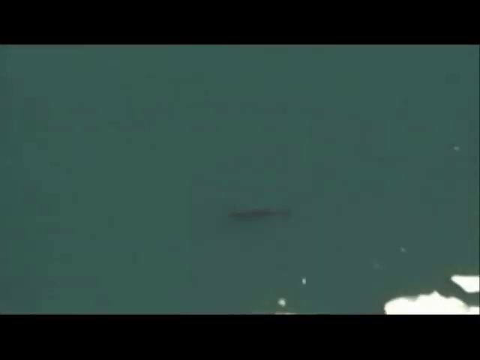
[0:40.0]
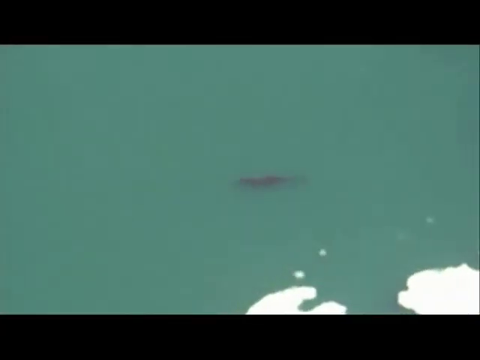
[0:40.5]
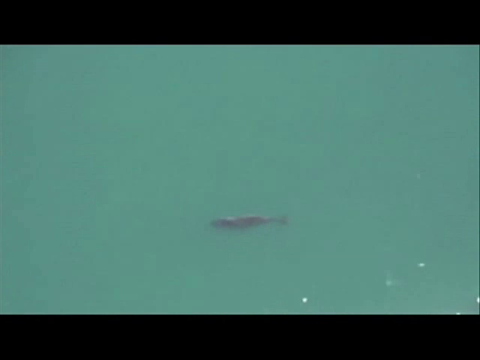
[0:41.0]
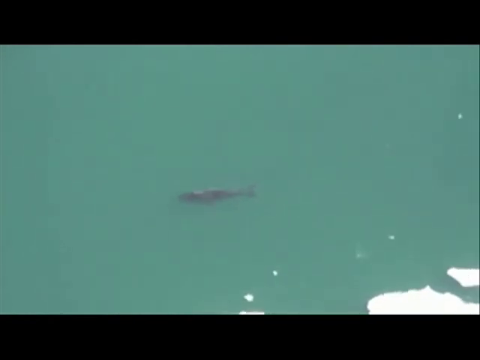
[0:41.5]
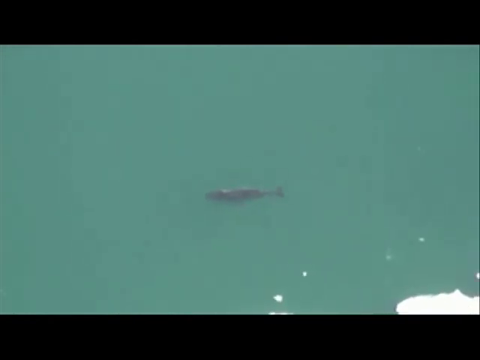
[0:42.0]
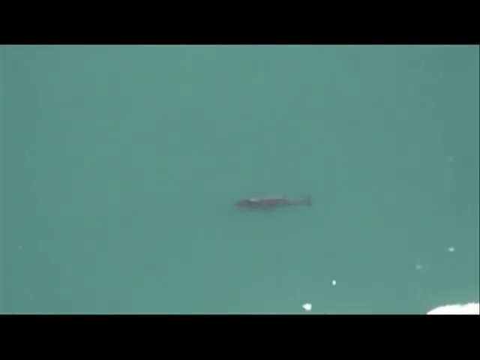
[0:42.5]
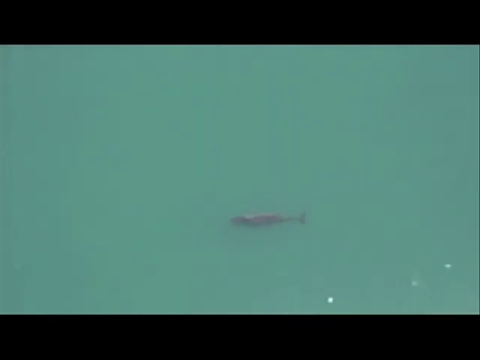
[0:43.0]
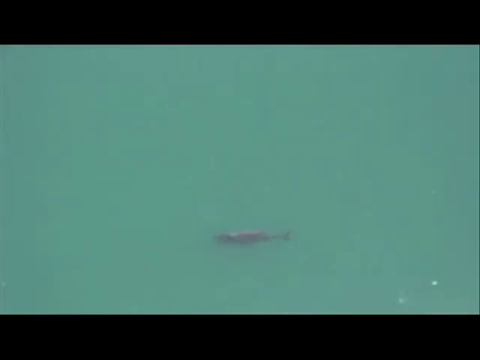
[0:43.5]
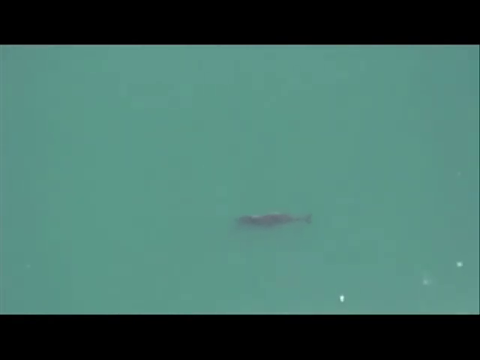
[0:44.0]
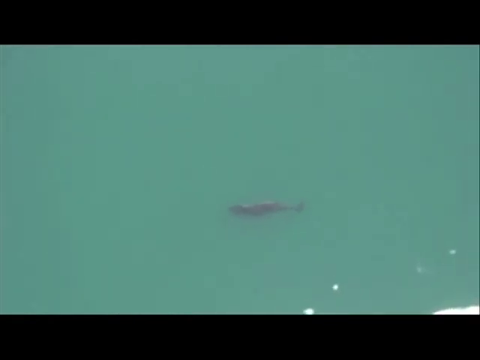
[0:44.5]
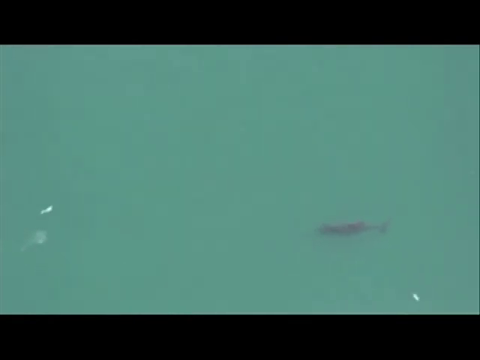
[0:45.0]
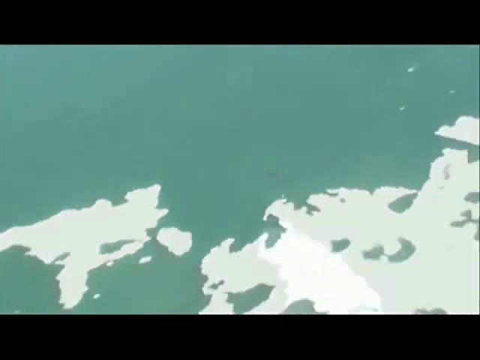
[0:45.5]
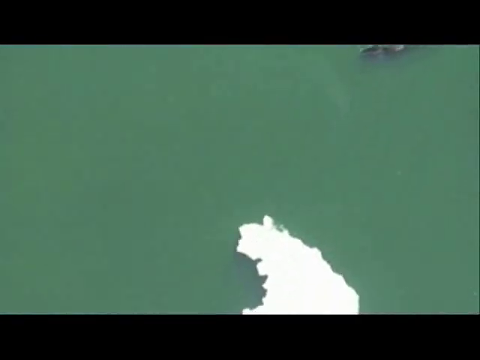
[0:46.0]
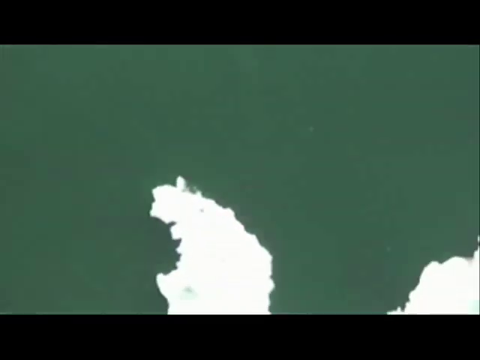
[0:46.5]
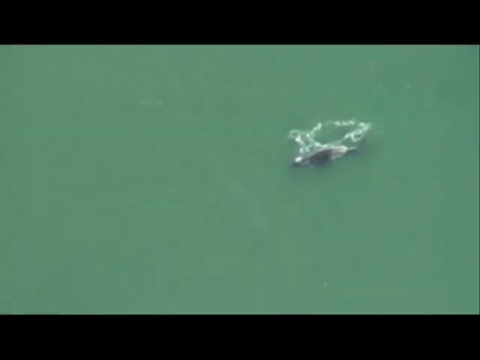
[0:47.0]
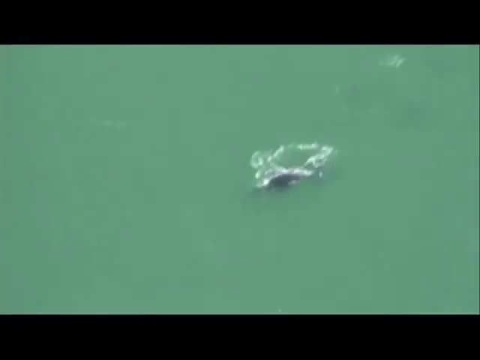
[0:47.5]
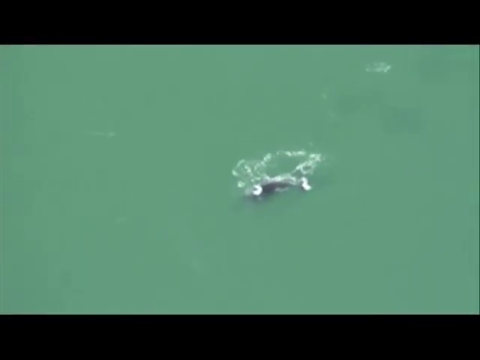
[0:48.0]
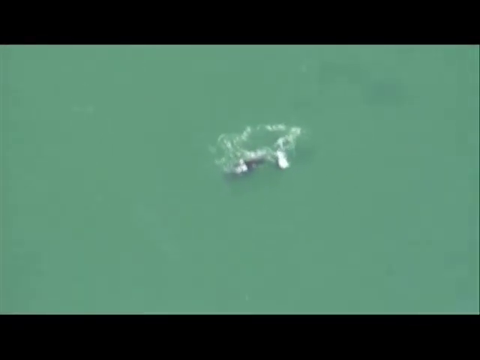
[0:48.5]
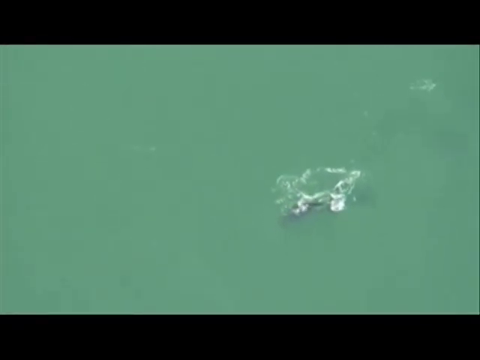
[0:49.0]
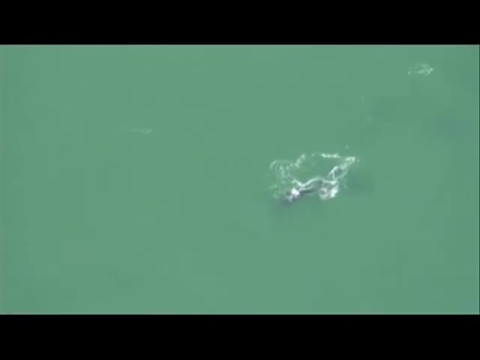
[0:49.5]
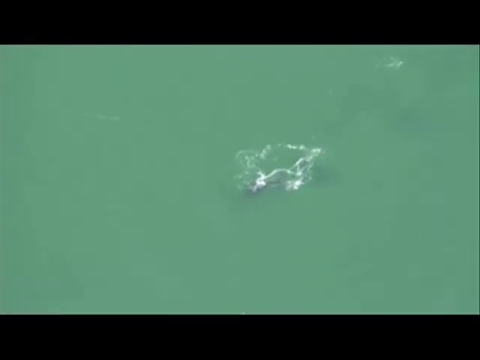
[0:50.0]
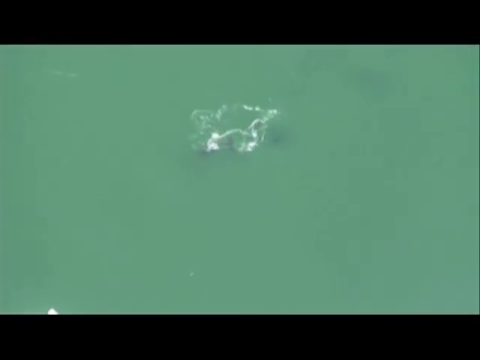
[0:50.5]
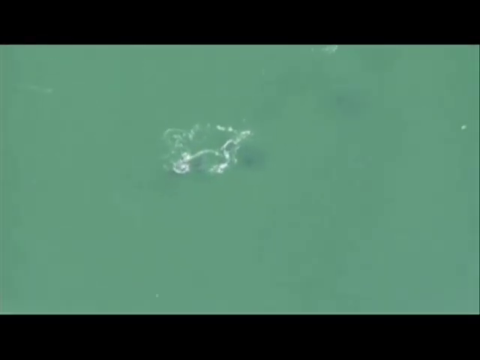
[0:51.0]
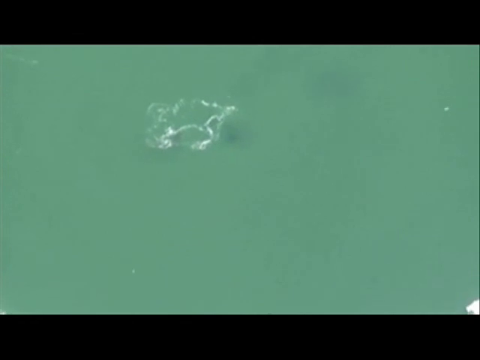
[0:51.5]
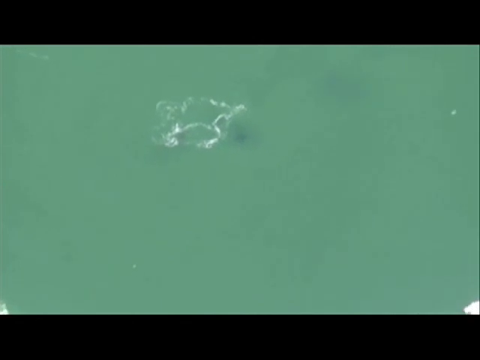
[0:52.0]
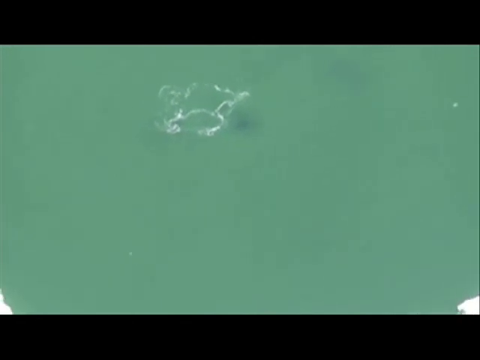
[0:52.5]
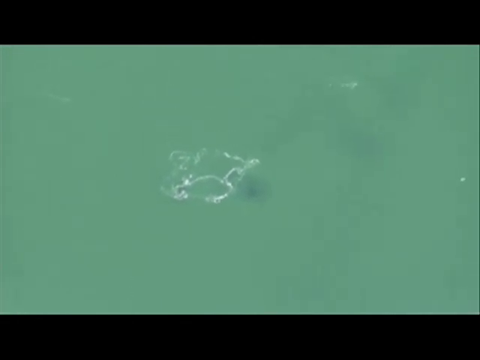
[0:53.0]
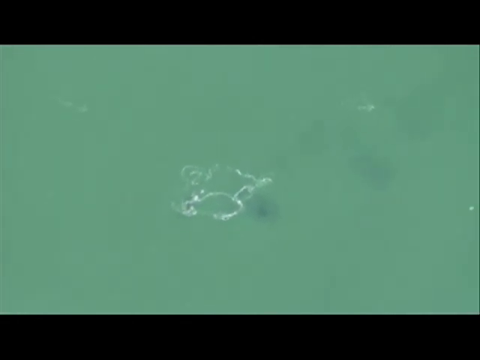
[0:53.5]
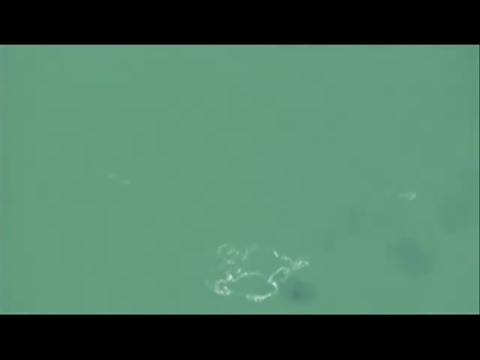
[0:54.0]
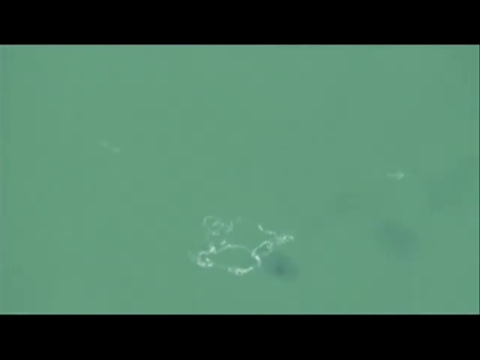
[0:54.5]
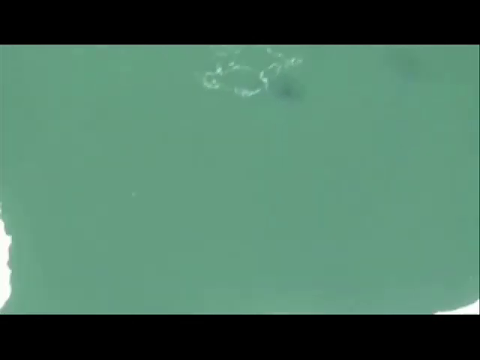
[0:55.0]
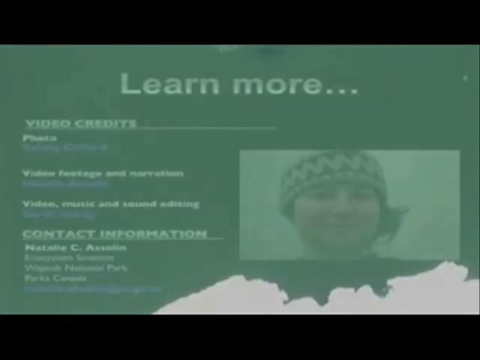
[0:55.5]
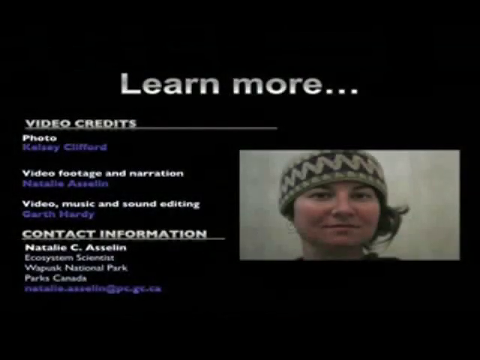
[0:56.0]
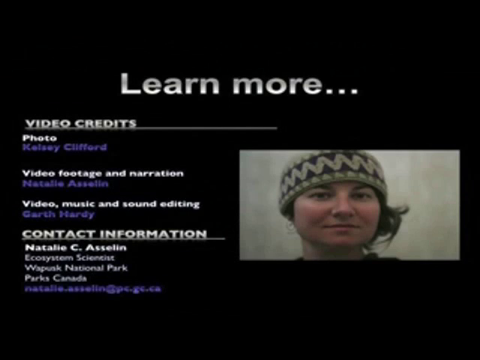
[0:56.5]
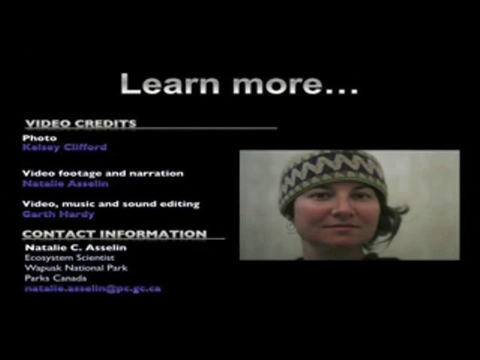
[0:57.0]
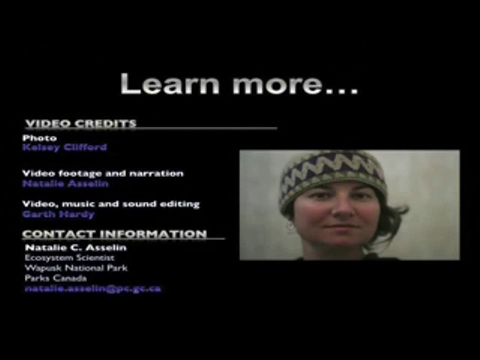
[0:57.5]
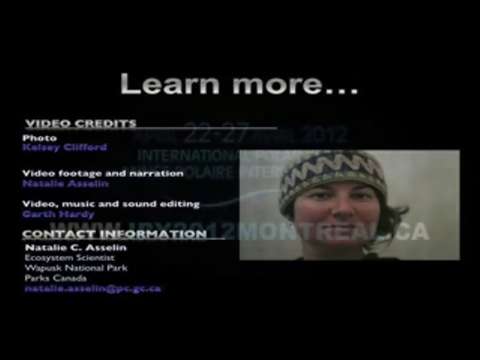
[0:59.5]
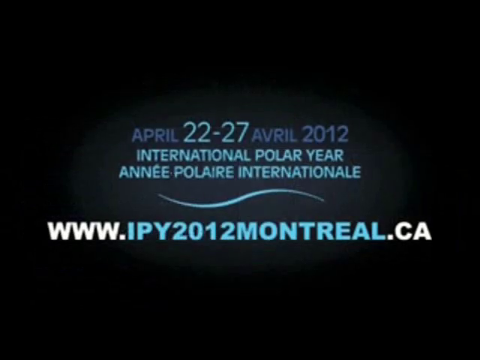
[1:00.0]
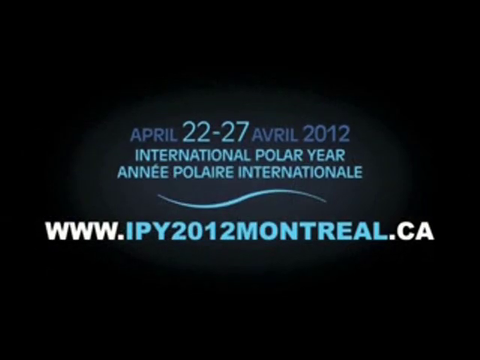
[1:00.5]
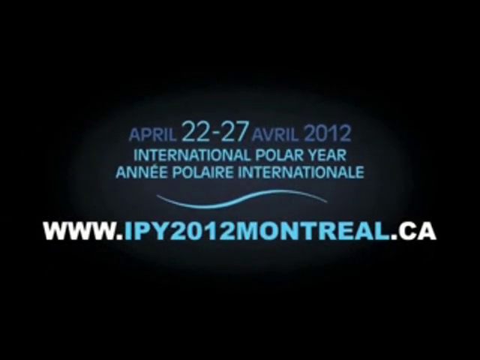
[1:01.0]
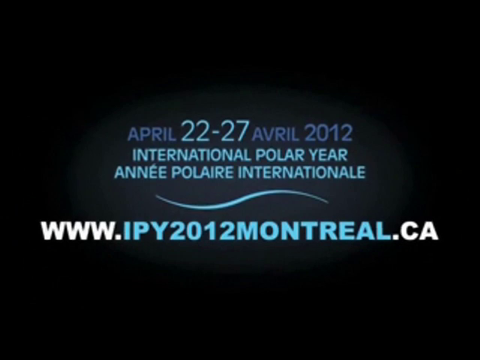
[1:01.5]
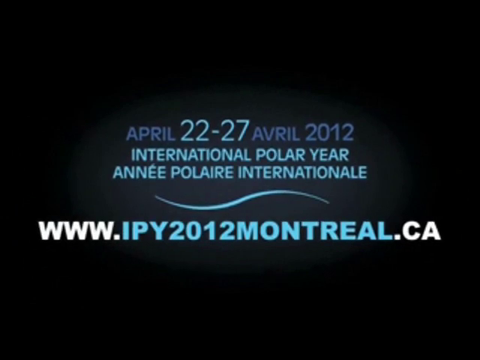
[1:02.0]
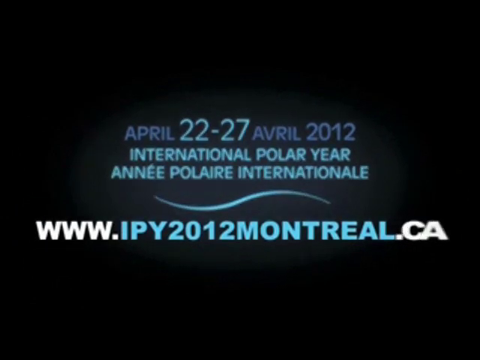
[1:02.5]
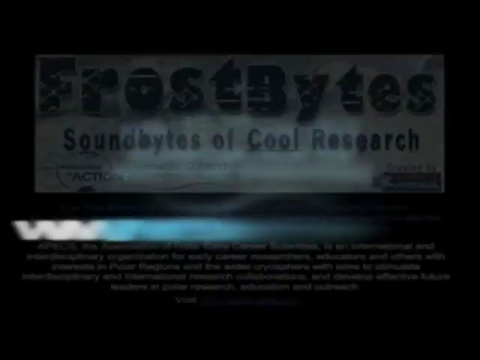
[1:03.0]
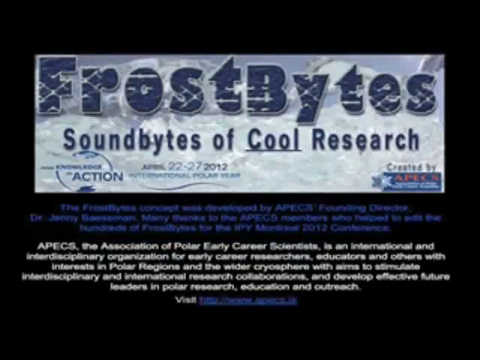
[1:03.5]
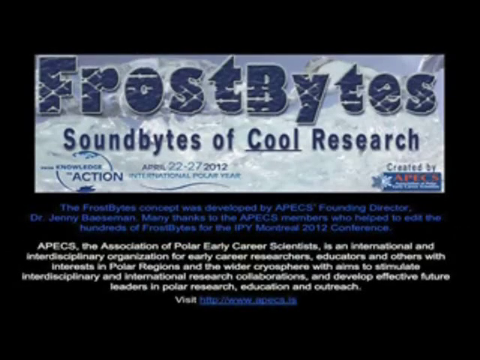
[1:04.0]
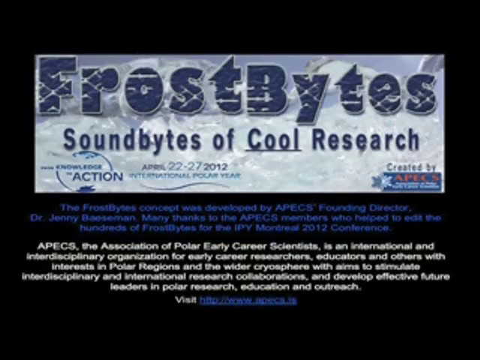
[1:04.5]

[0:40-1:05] An aerial shot taken from above shows a killer whale in the ocean water near some land covered in ice and snow. At the very end, a black background has gray and white words reading "learn more..." and "video credits," listing who did the photo, who did the video footage and narration, and who did the video music and sound editing. Contact information is also shown, along with a picture on the right of a woman wearing a winter hat, her hair pulled up and sticking out on the left side of her head, which is the right side of the picture.